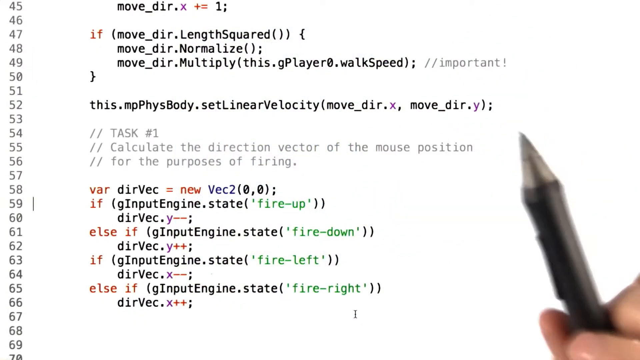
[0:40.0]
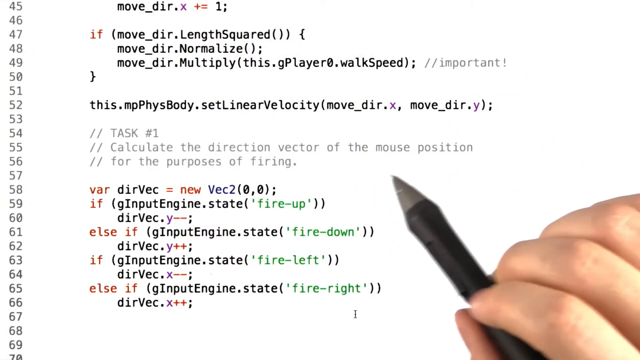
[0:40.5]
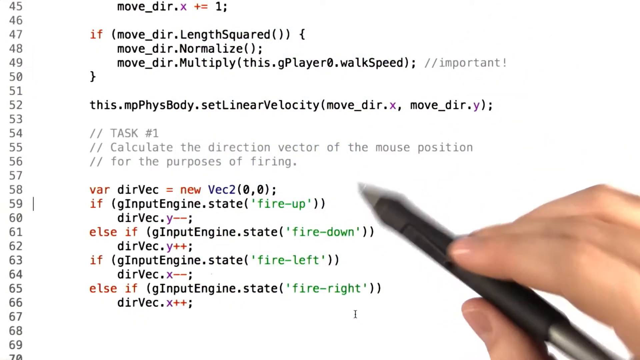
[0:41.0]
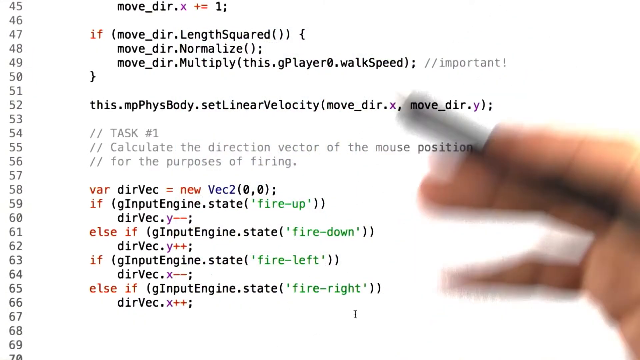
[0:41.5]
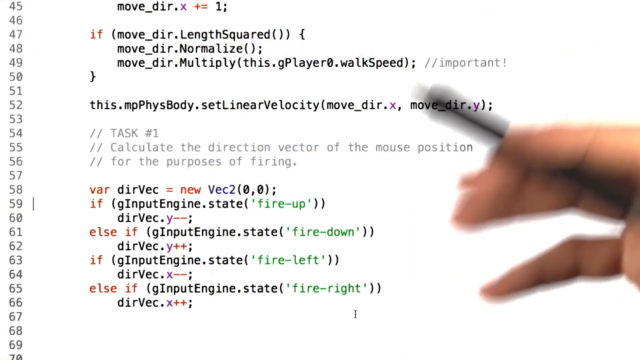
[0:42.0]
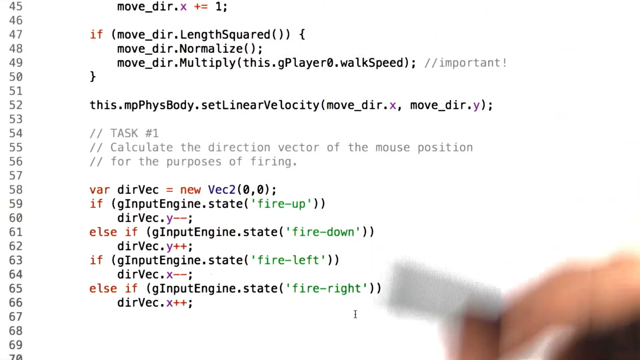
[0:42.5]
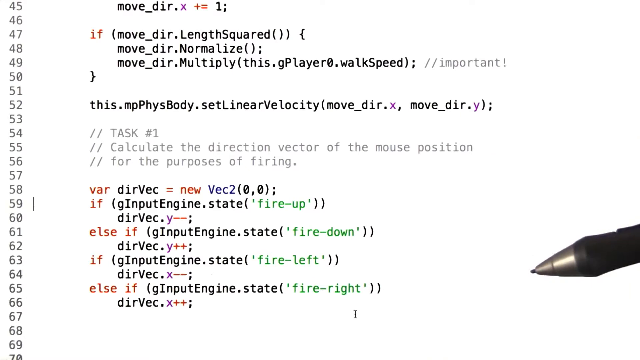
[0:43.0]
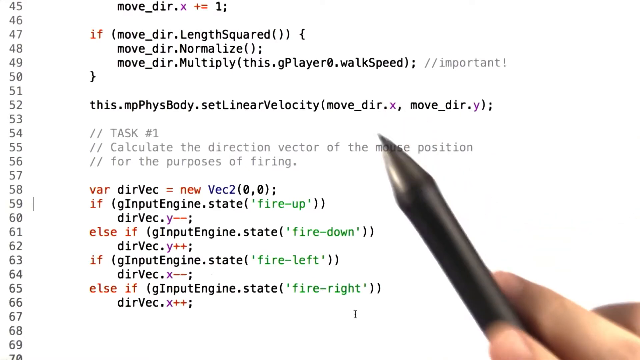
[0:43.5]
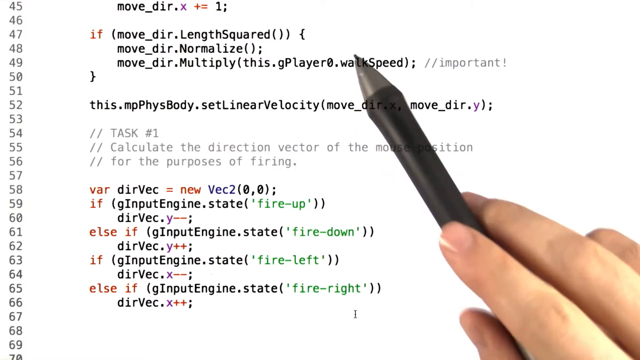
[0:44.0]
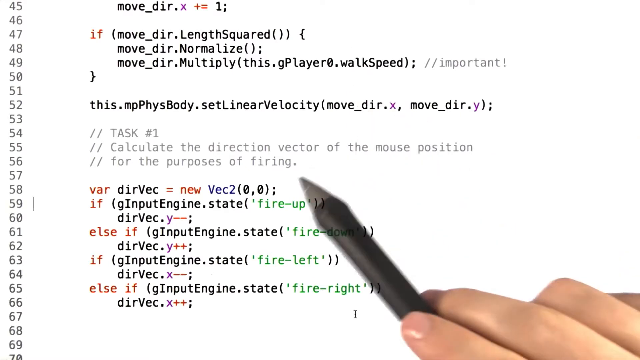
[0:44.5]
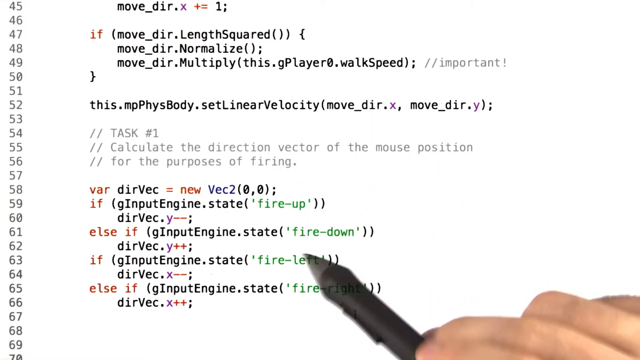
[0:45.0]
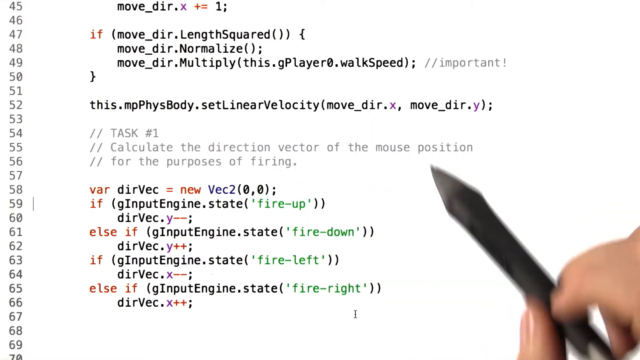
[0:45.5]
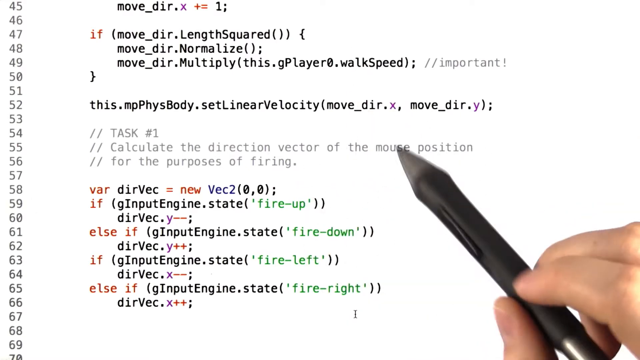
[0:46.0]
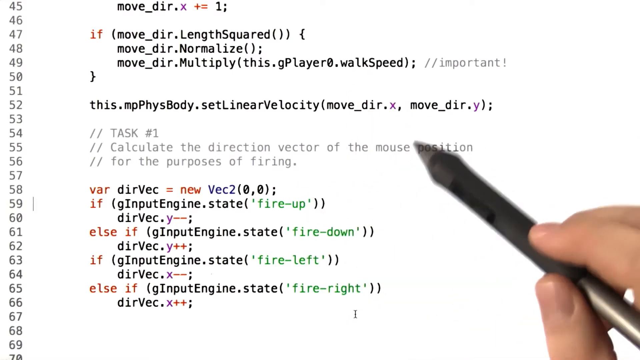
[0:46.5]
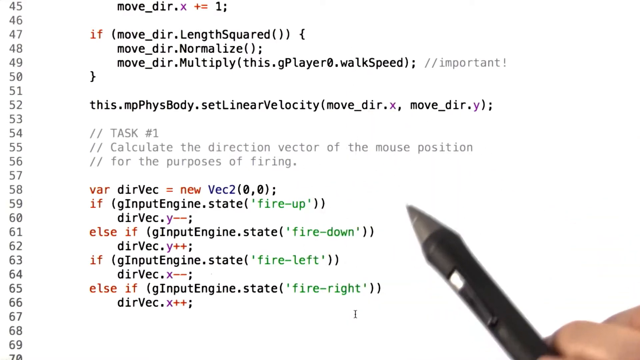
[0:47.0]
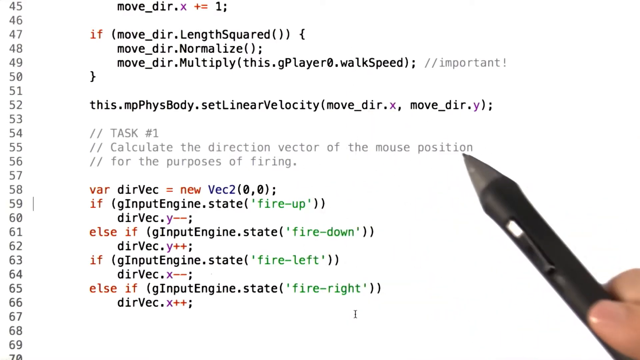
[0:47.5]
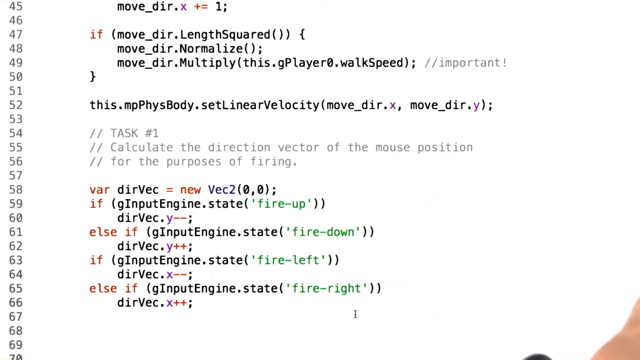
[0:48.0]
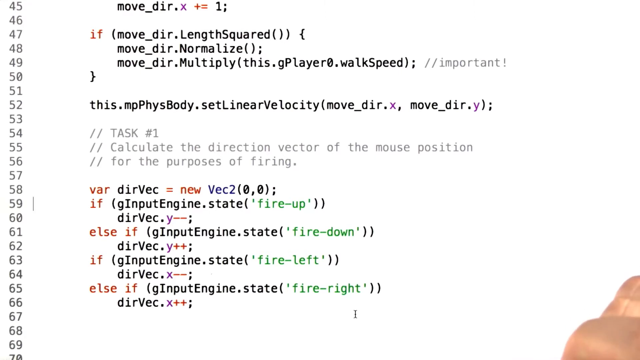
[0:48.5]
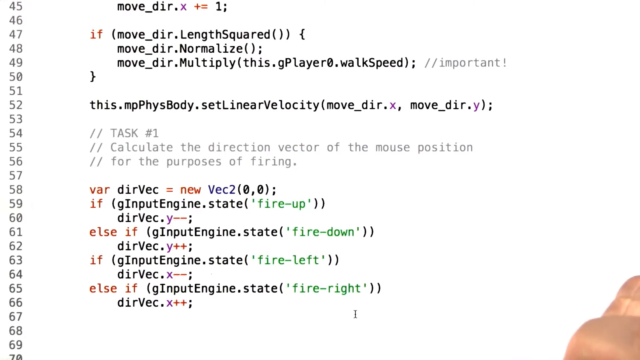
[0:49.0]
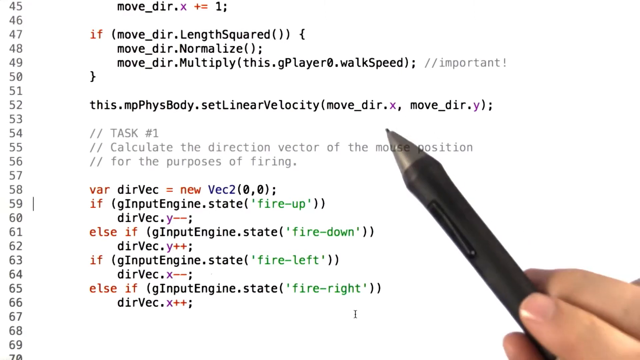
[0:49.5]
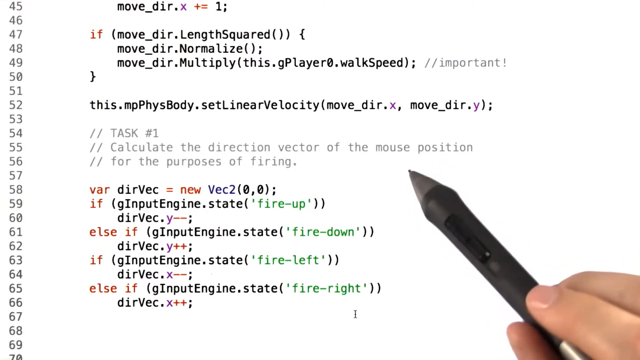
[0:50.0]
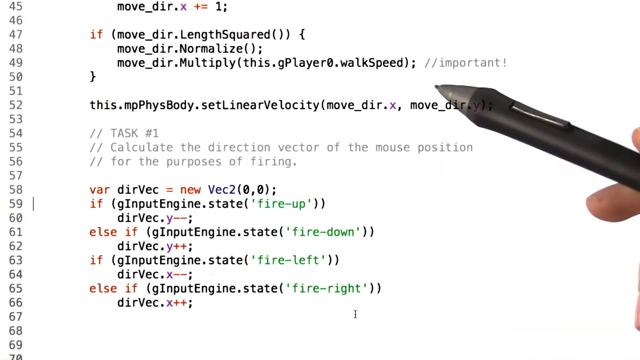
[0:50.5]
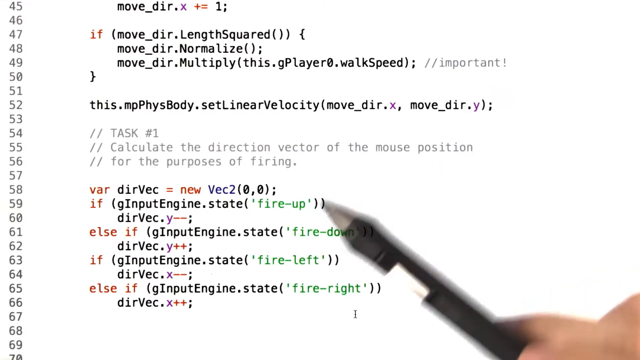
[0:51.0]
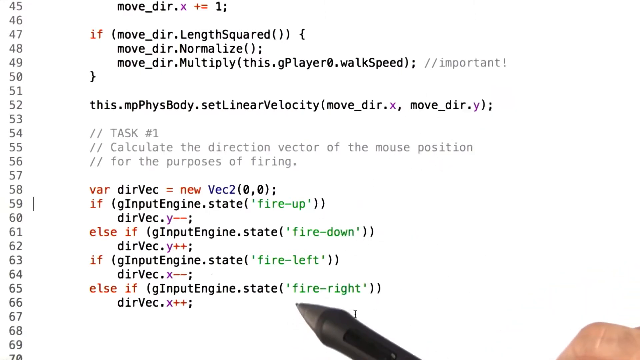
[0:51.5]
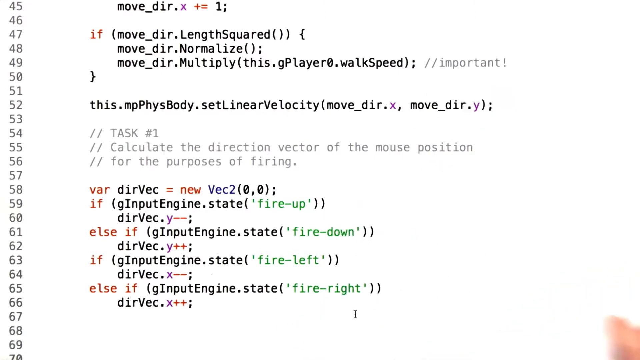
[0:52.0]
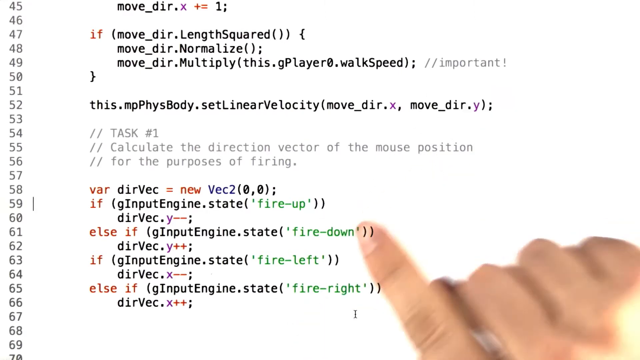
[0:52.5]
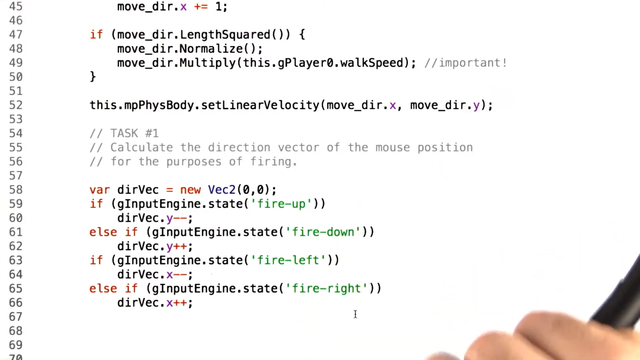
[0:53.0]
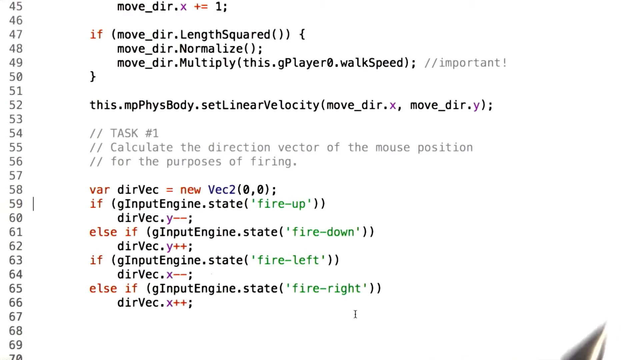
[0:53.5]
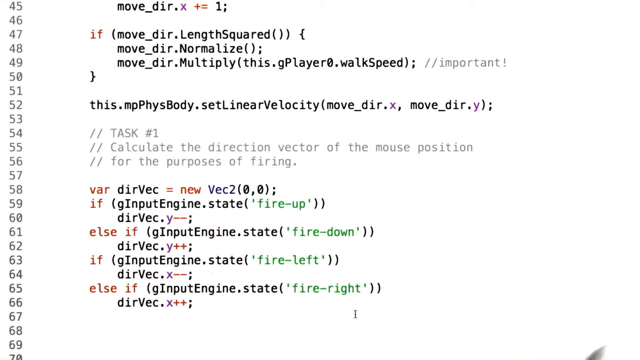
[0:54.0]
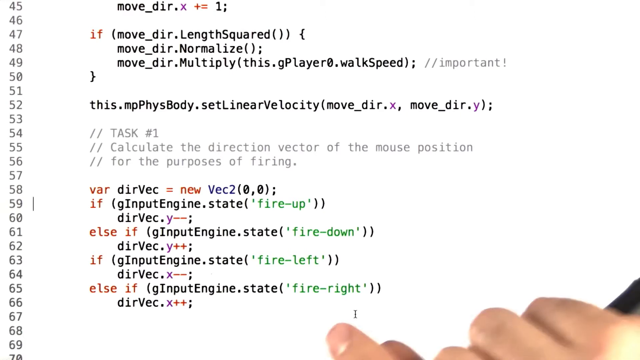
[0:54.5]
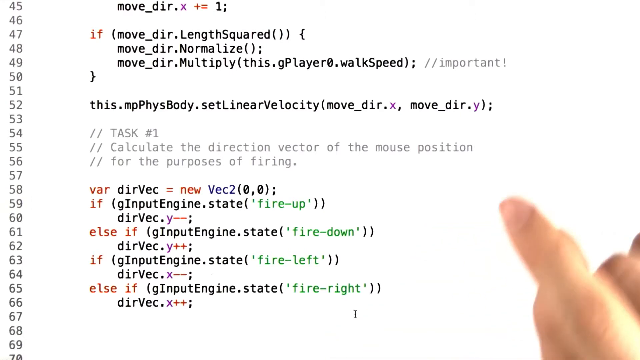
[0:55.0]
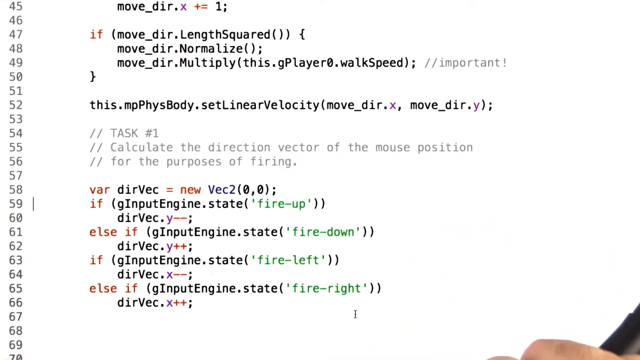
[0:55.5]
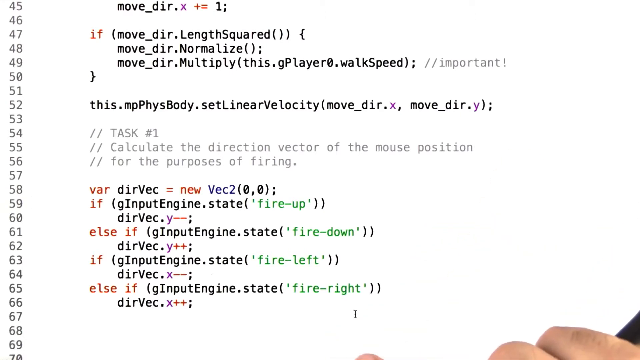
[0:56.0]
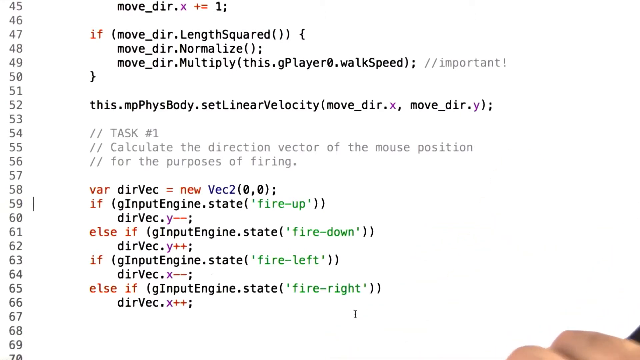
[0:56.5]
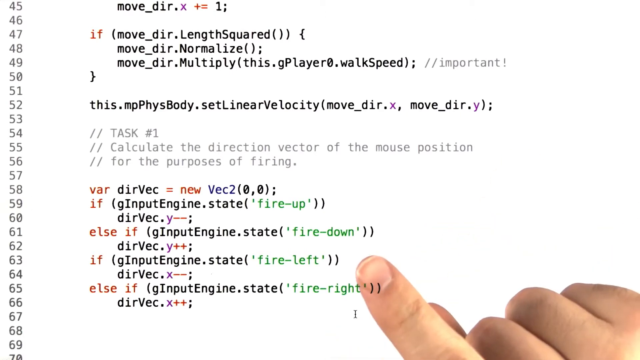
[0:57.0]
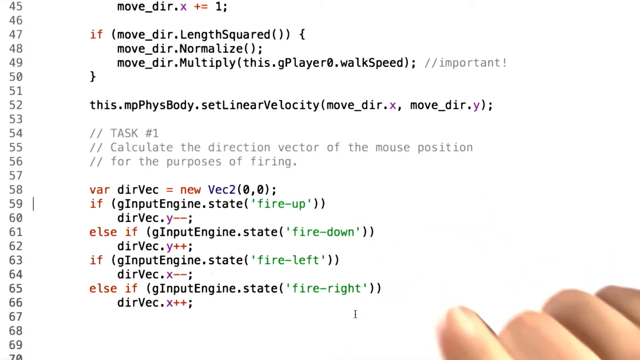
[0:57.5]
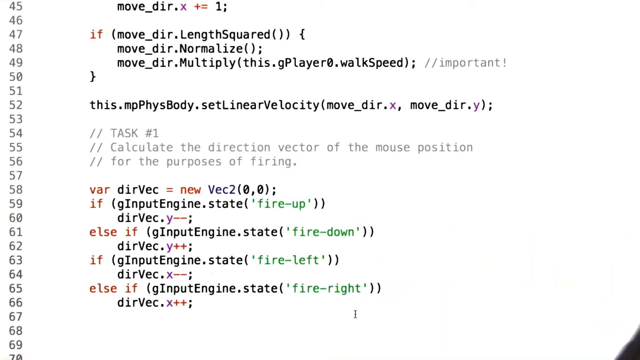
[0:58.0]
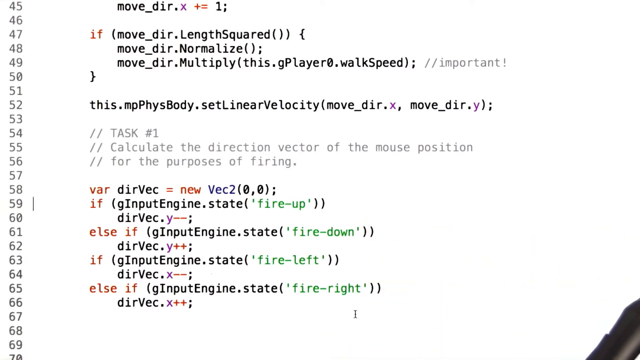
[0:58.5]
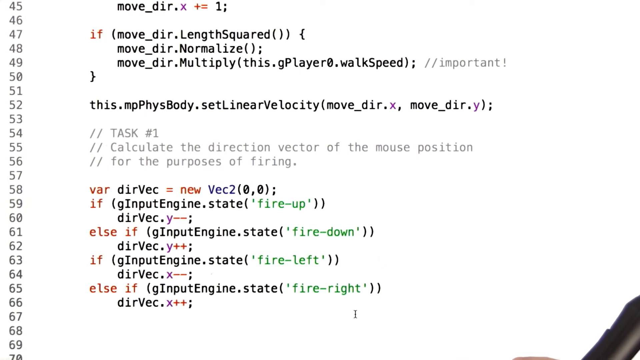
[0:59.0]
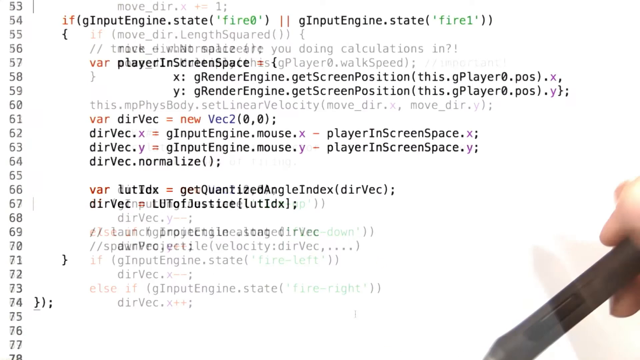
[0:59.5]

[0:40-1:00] A human hand holding a mechanical pencil points at different lines of code. The code appears to be JavaScript or a similar language such as TypeScript, and uses concepts such as vectors and a physics engine. At the top, lines 47 through 50 deal with movement, with a move_dir variable, sizing, and a walk speed variable on line 49. Line 52 deals with the velocity of a physics body, with an mpPhysBody variable. Line 54 shows task number 1 with the description "calculate the direction vector of the mouse position for the purpose of firing." Lines 58 through 66 are additional components for the directional firing command.